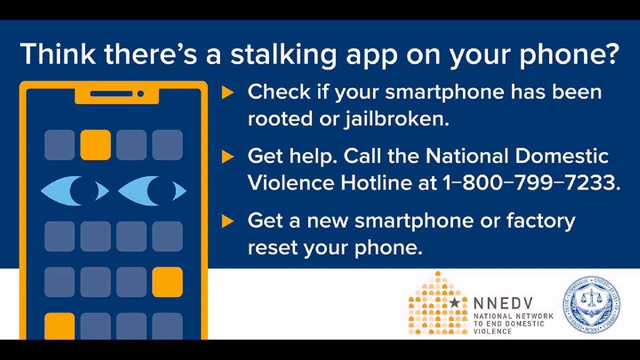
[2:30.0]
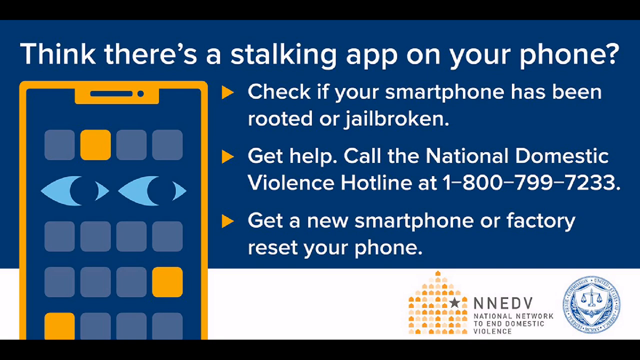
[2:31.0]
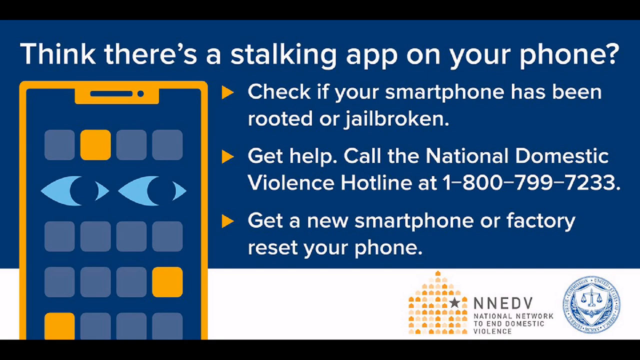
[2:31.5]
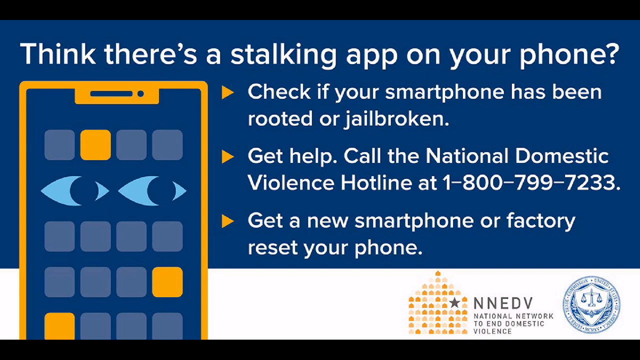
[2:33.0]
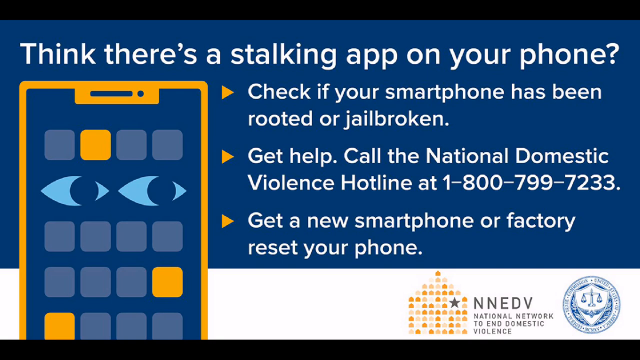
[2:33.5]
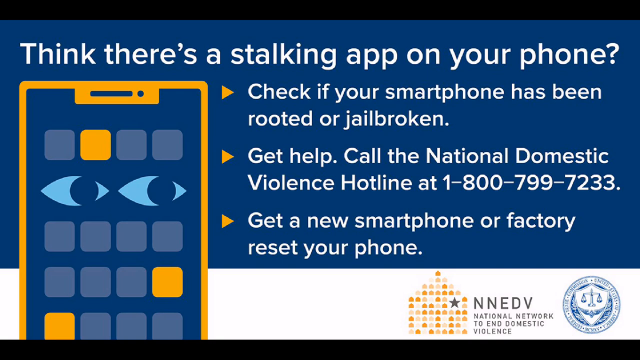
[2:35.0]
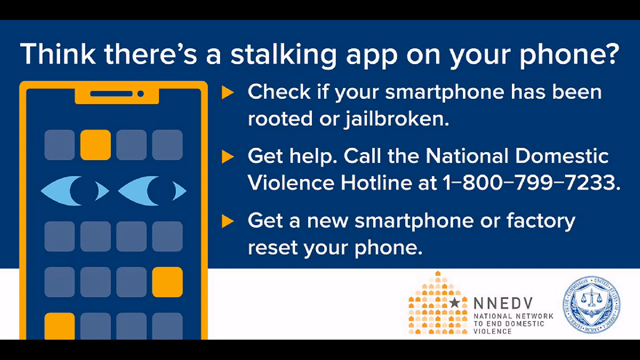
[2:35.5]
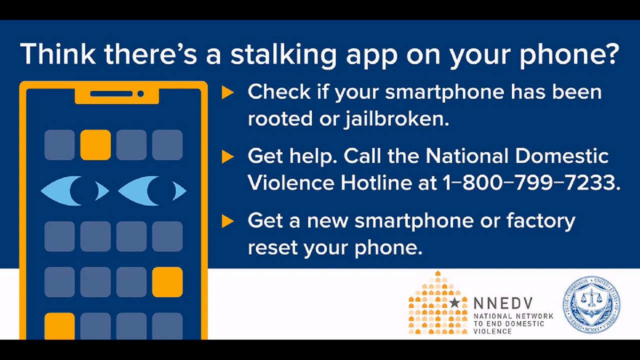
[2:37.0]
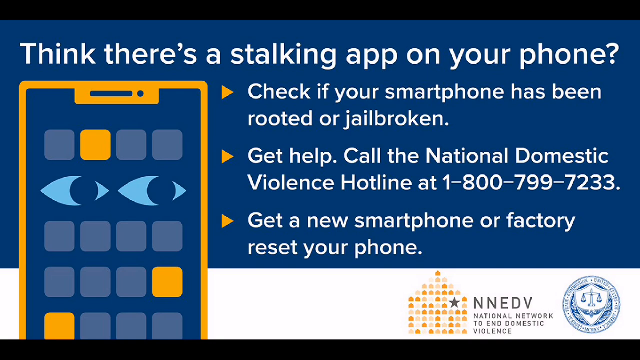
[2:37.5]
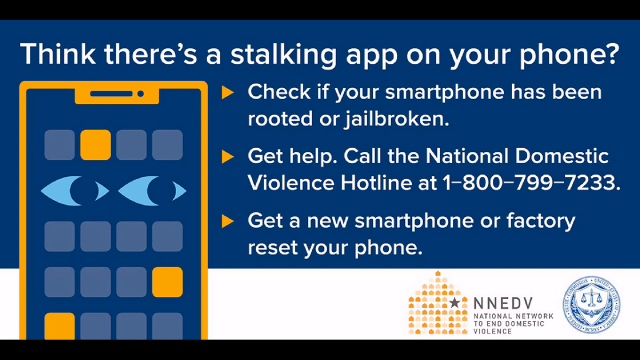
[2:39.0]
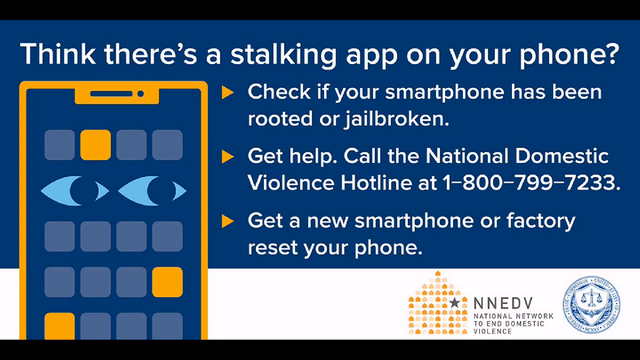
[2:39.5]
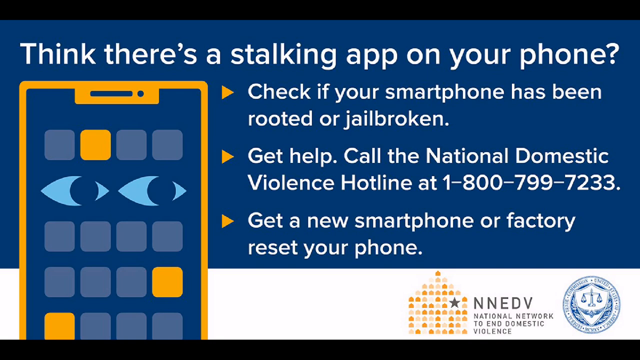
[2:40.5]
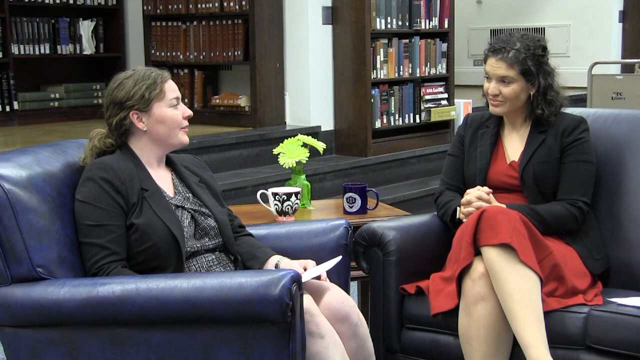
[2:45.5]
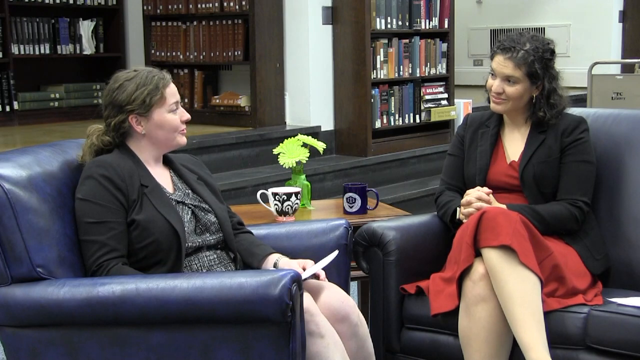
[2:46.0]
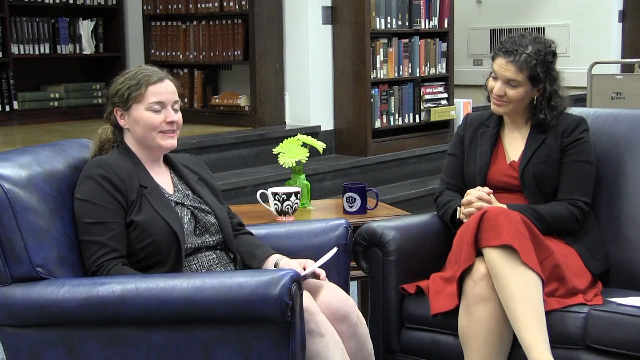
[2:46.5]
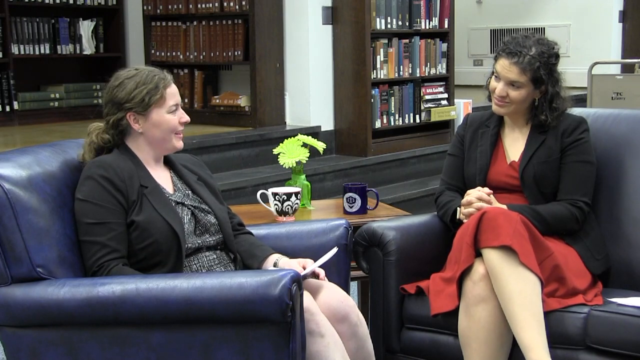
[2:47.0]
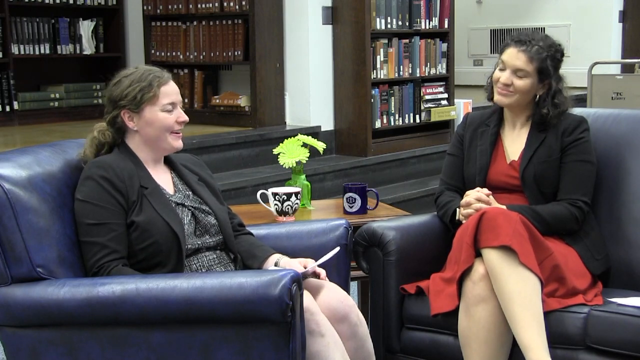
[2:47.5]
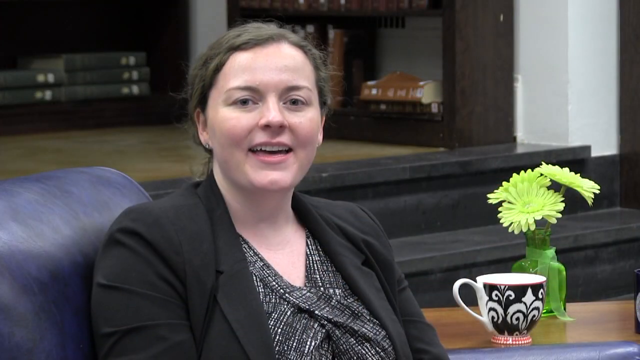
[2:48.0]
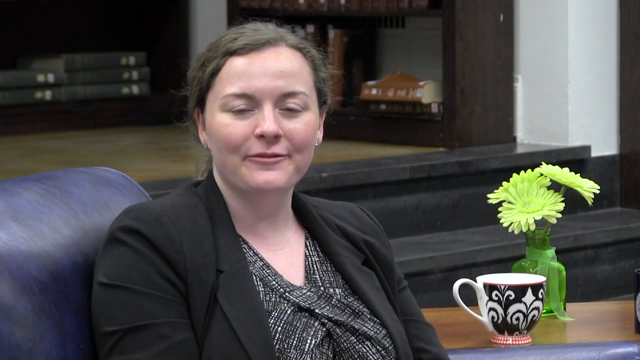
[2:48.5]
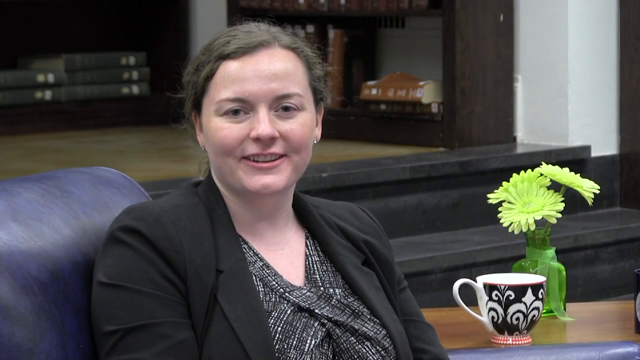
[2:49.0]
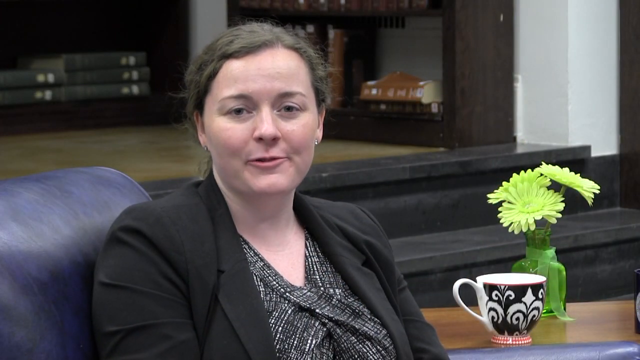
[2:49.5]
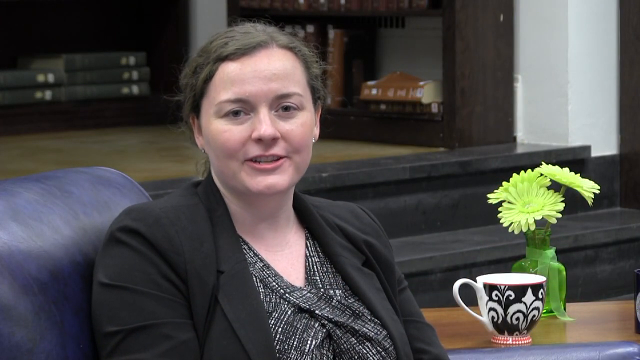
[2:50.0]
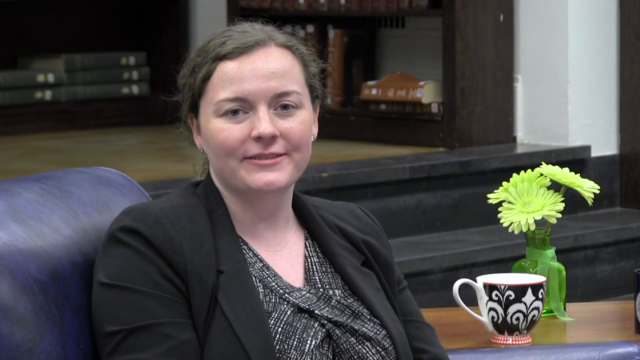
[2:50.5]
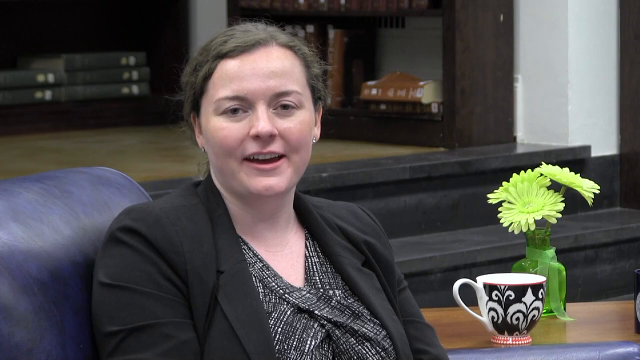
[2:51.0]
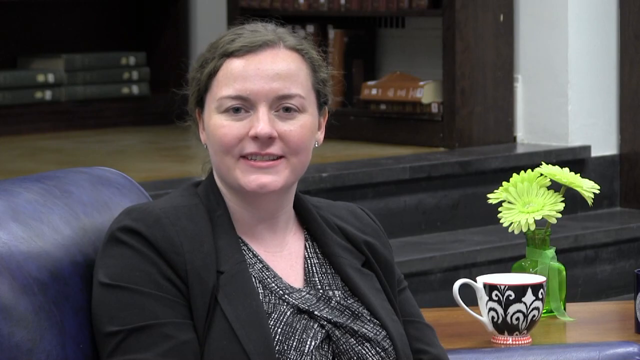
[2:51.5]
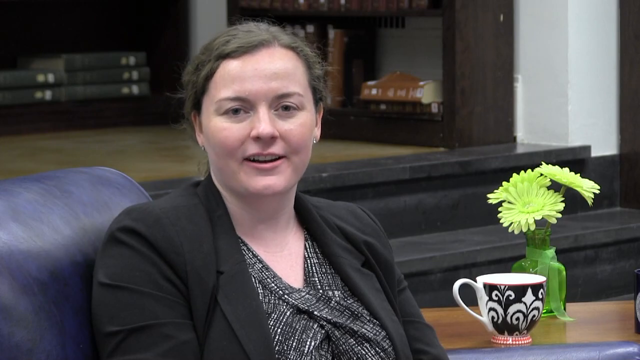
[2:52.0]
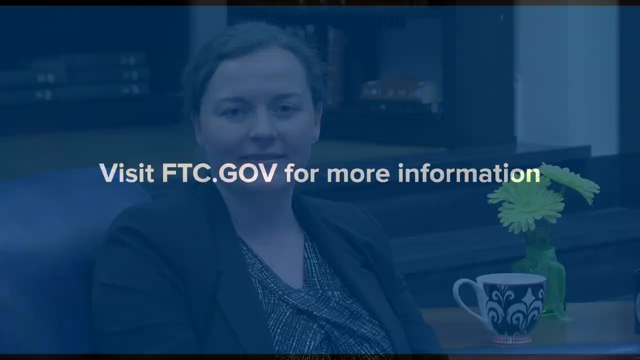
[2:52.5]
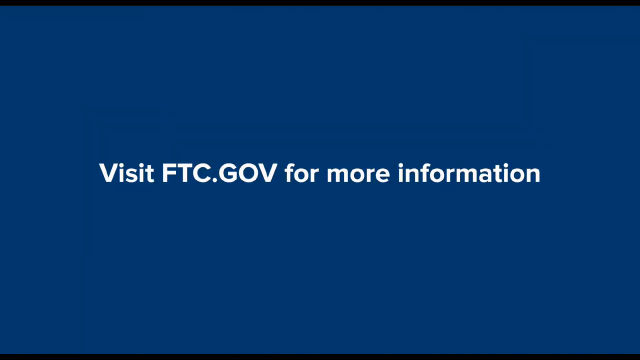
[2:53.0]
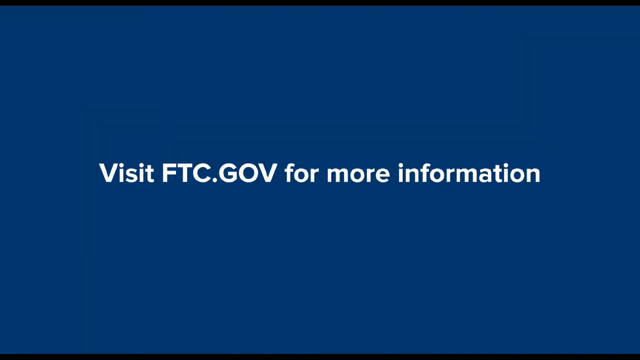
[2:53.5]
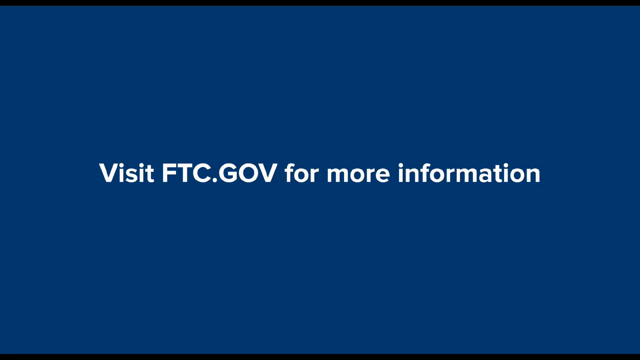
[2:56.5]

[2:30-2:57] The same screen remains, with nothing moving. Text includes "Get help. Call the domestic violence hotline," naming the national domestic violence hotline, and directs viewers to "visit FTC.gov for more information."